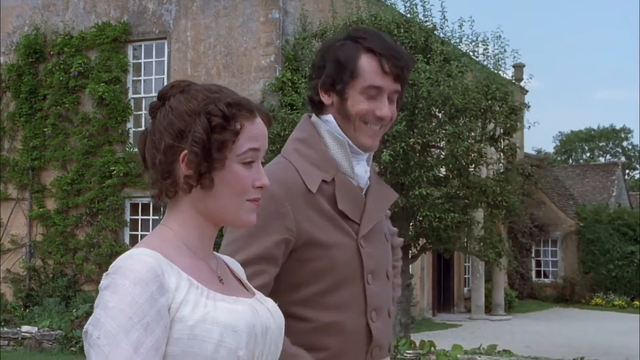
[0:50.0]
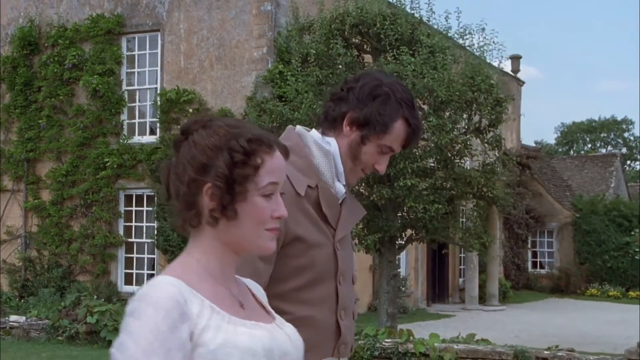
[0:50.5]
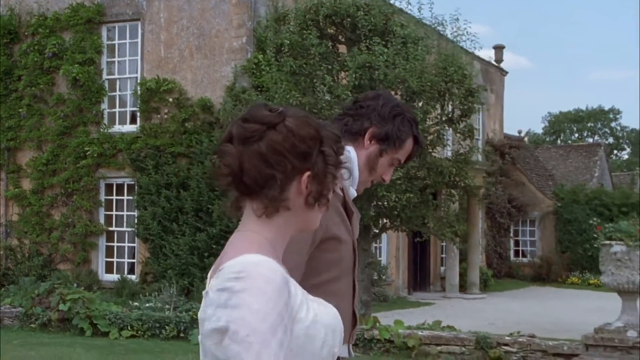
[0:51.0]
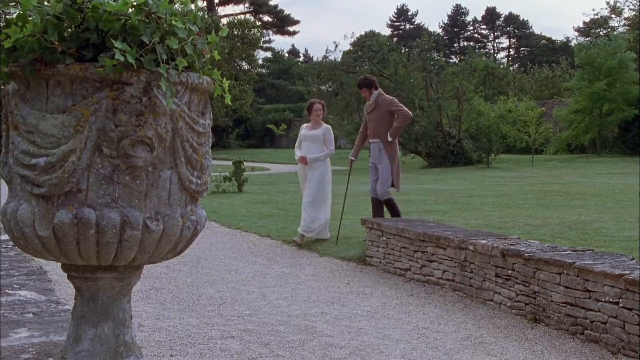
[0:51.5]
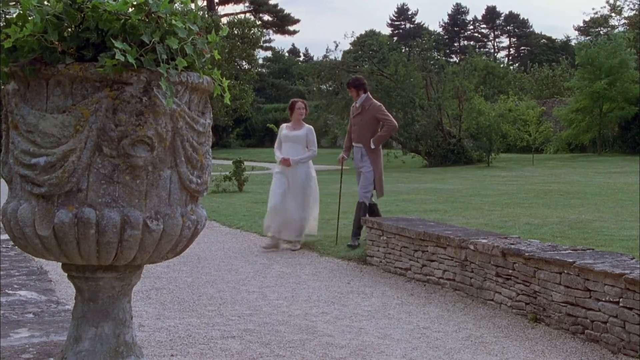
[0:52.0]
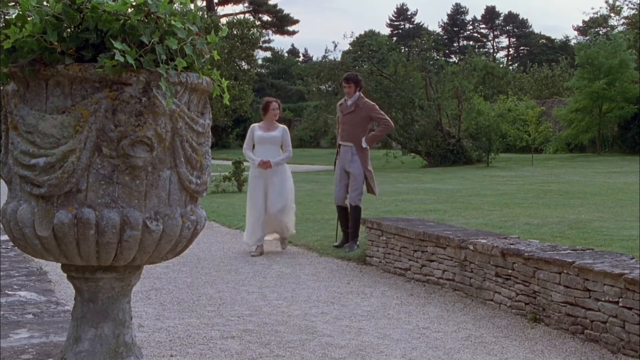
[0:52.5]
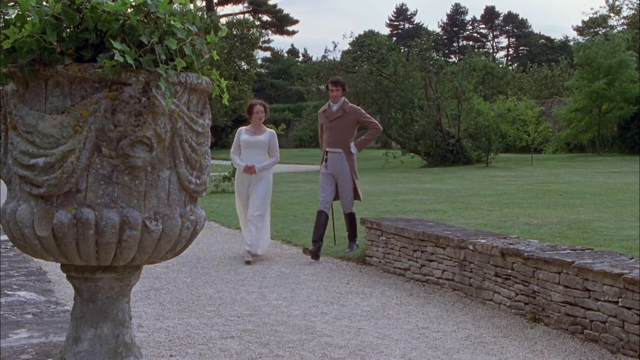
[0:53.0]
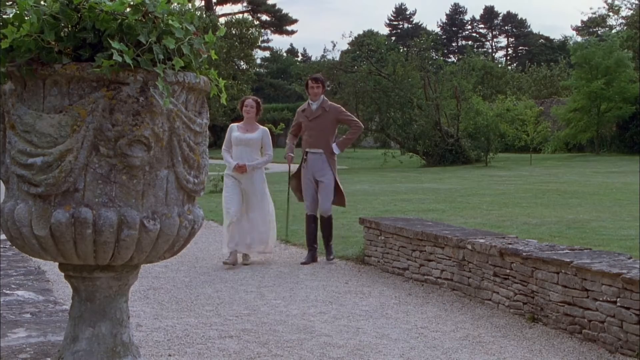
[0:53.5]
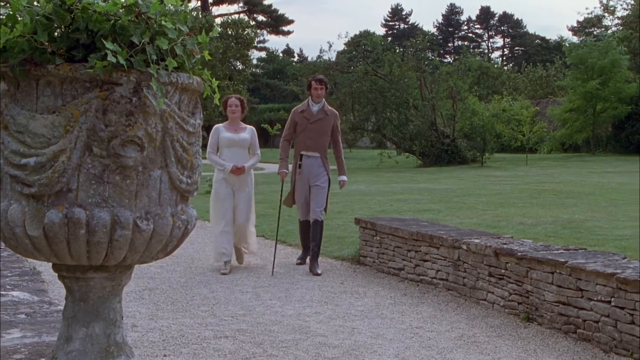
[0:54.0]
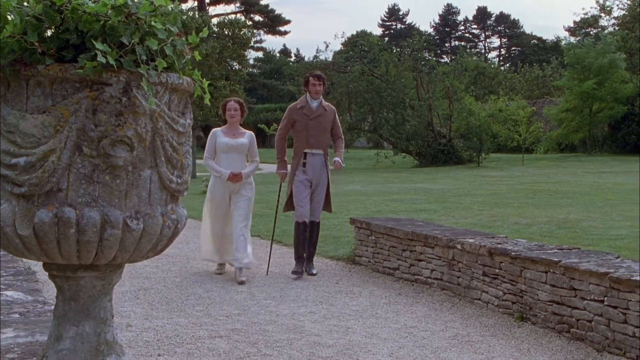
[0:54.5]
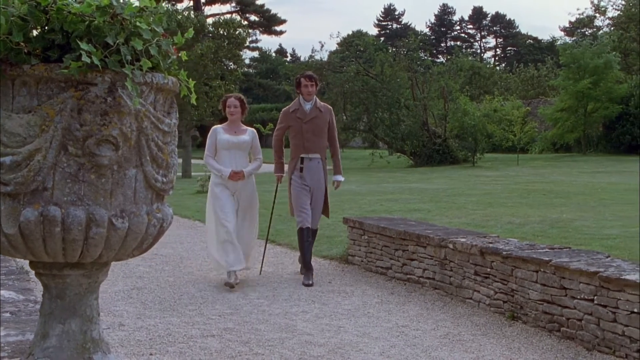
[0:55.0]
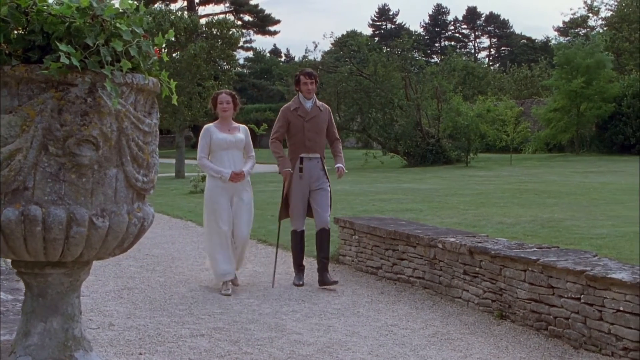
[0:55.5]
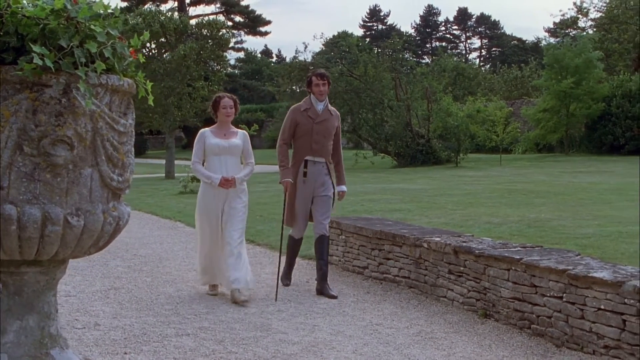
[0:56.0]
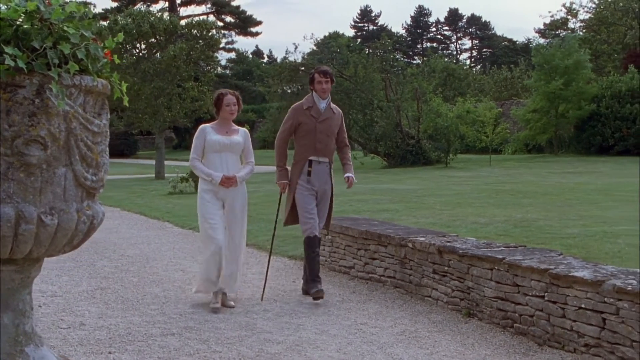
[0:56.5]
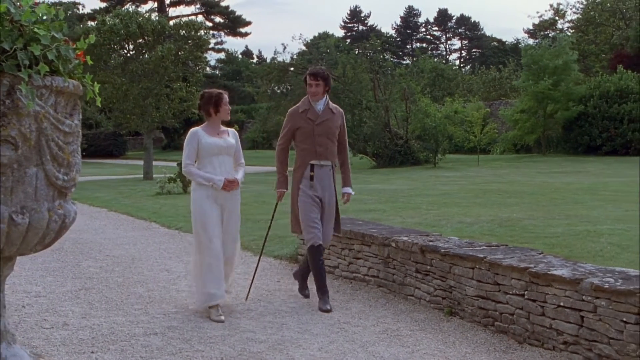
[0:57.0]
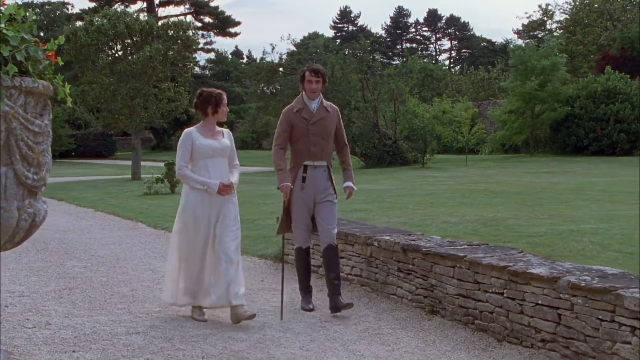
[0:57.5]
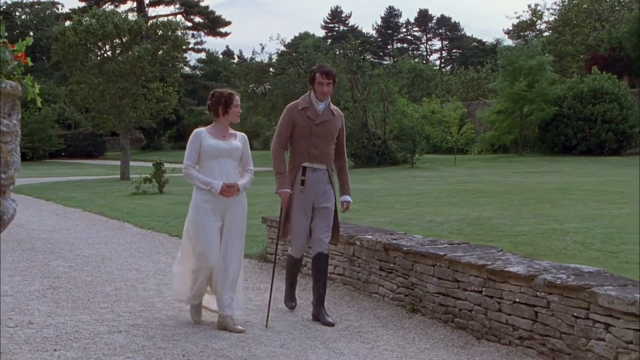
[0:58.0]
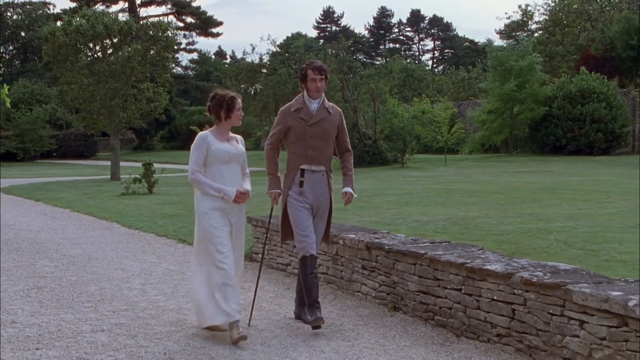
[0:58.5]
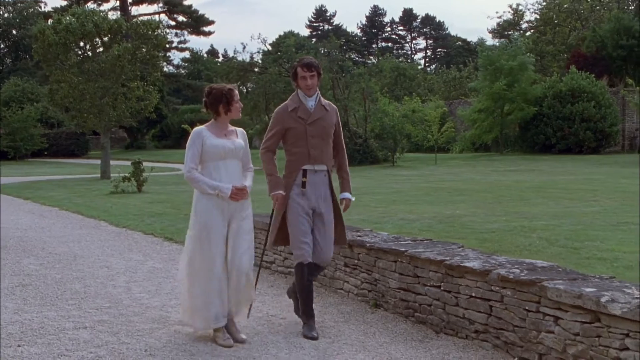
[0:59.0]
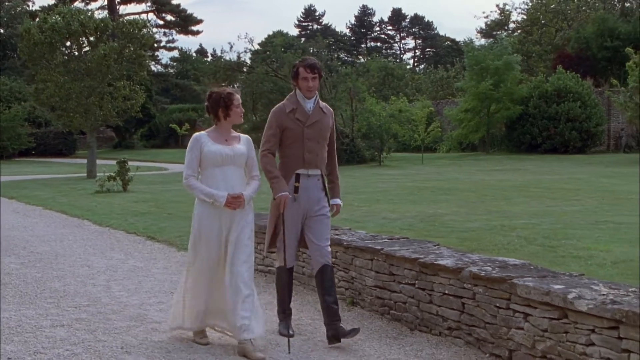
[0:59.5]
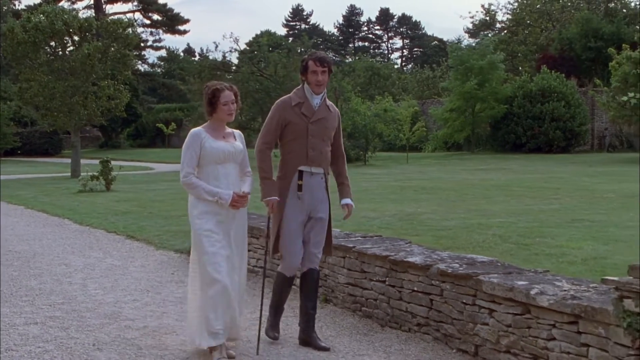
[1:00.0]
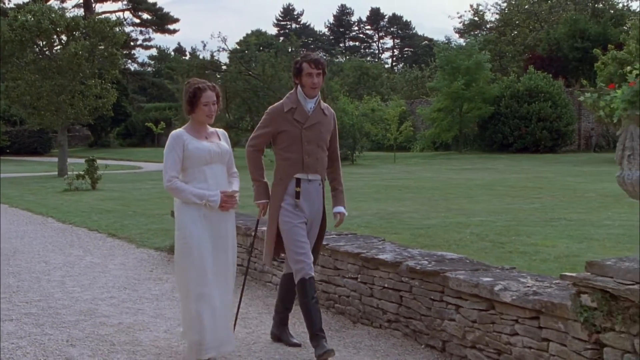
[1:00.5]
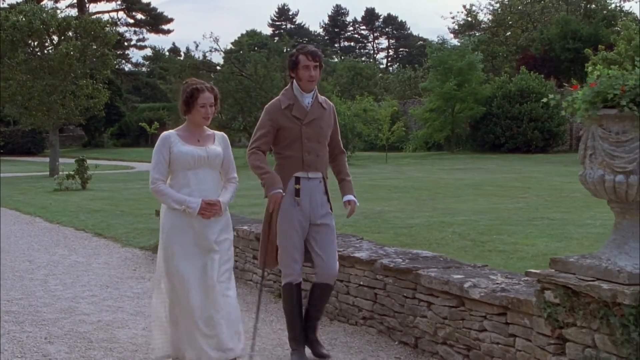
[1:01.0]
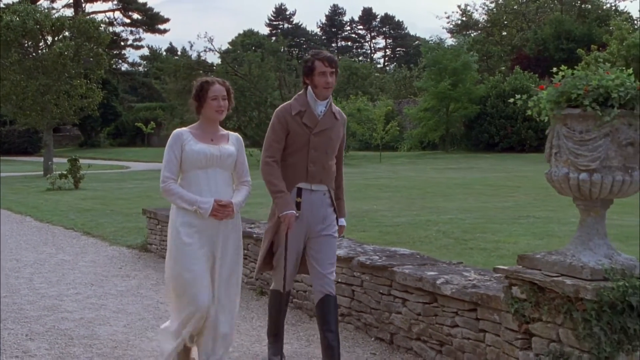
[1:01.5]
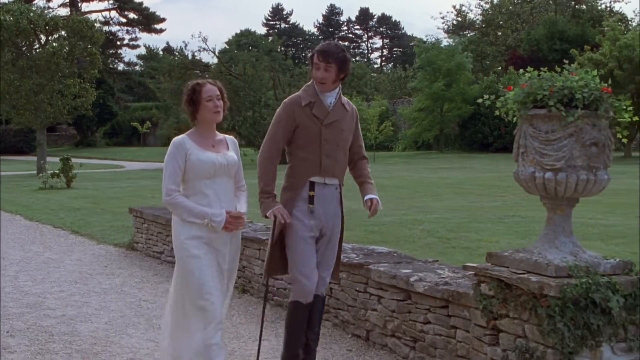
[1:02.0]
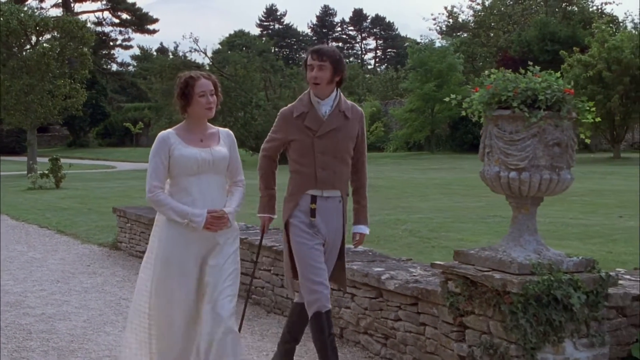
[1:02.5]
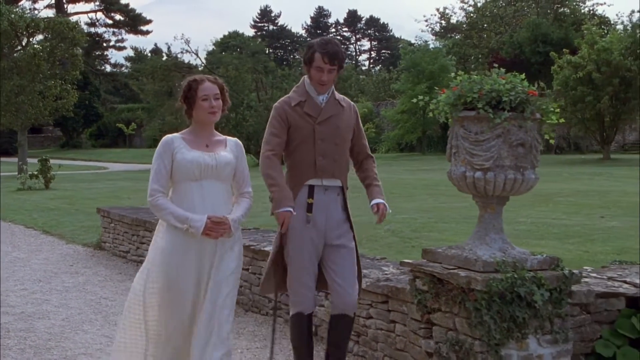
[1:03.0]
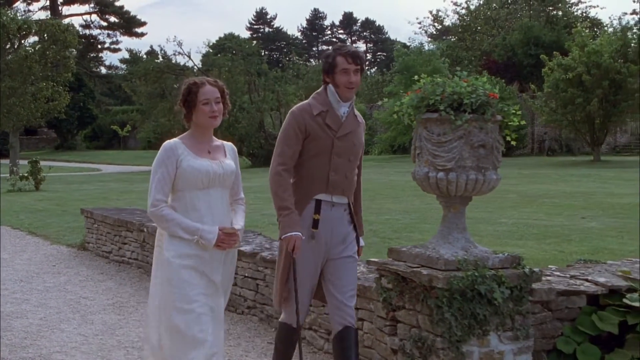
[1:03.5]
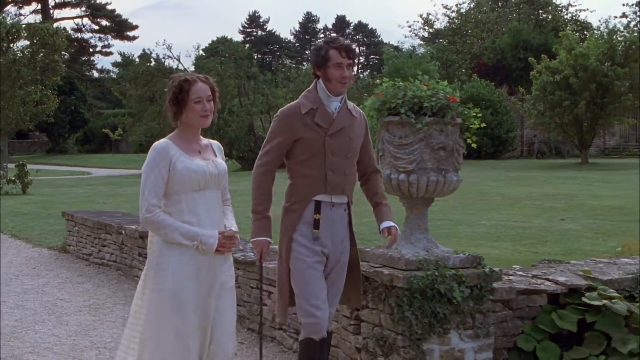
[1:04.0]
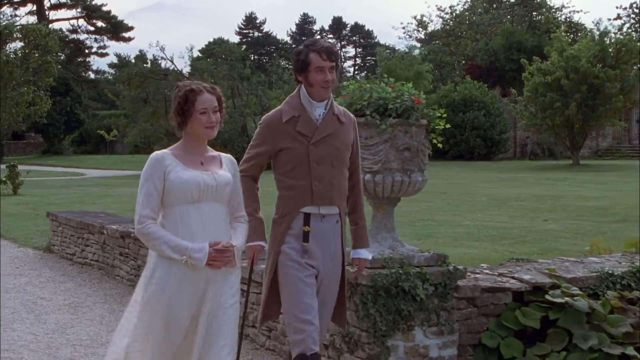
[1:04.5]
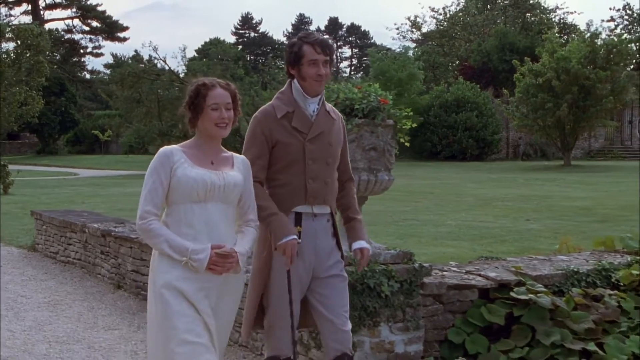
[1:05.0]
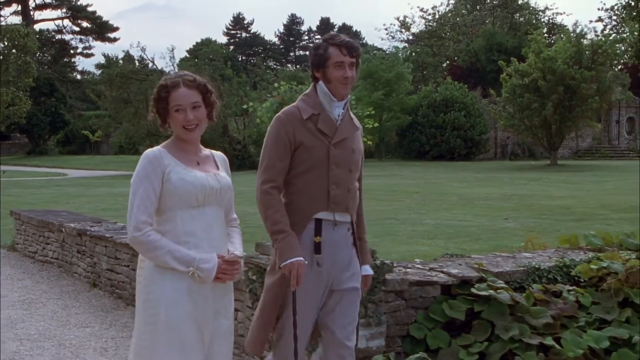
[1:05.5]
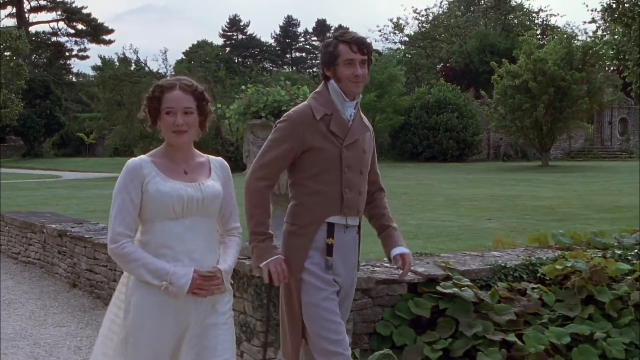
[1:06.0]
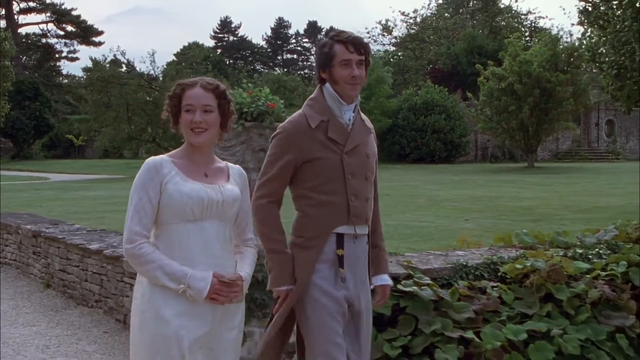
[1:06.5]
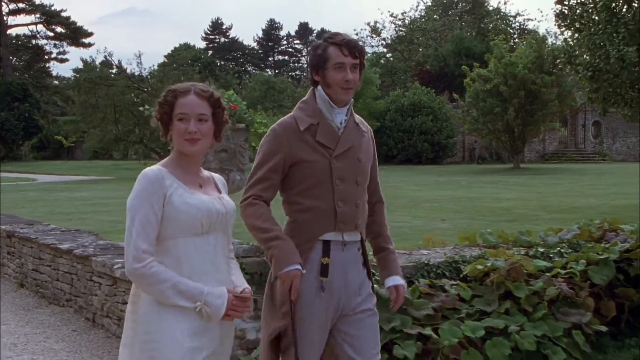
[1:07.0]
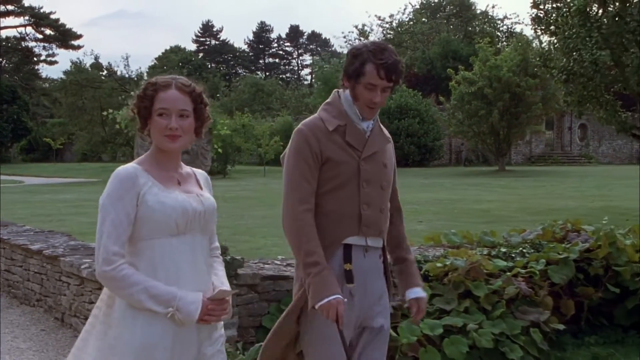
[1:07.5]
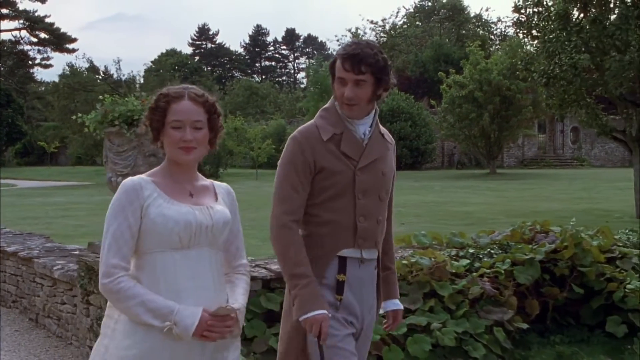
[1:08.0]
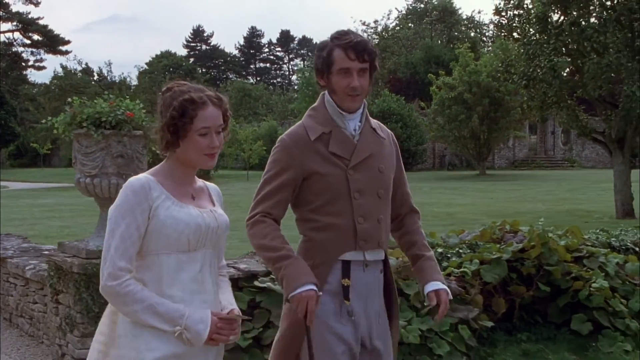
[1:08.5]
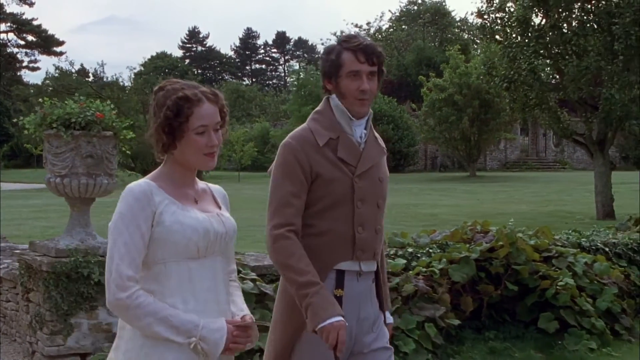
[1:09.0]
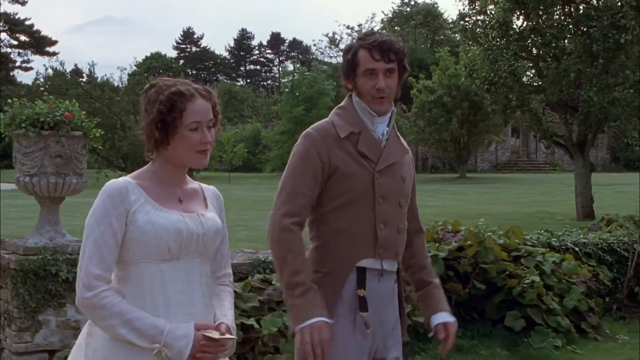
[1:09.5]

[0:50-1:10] The man and the woman keep walking through the garden, heading toward the entrance of the building. The garden is covered with a lot of grasses, trees, and flowers. They continue their conversation as they walk toward the building, the lady smiling.